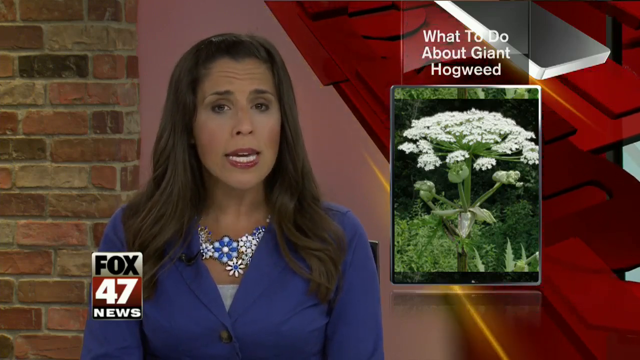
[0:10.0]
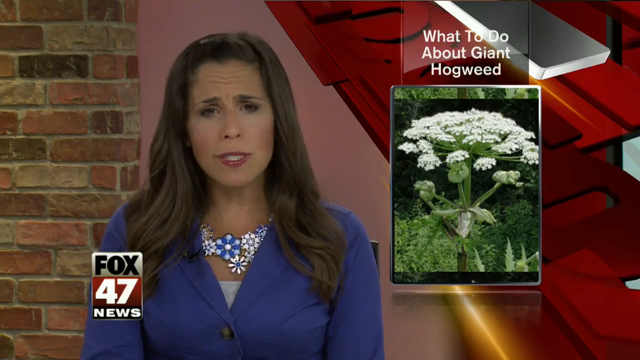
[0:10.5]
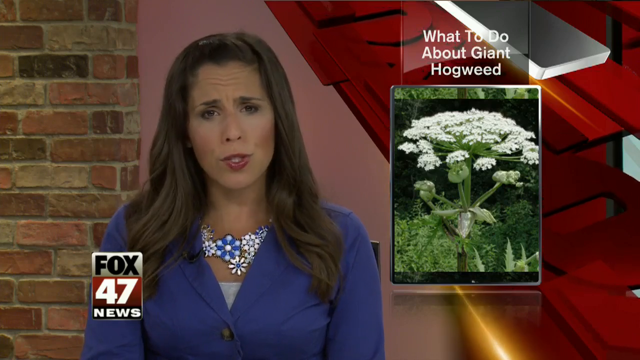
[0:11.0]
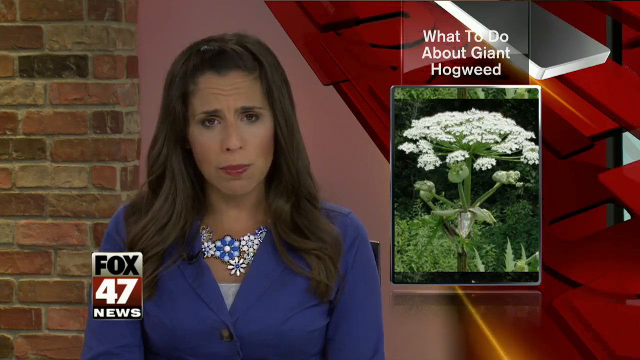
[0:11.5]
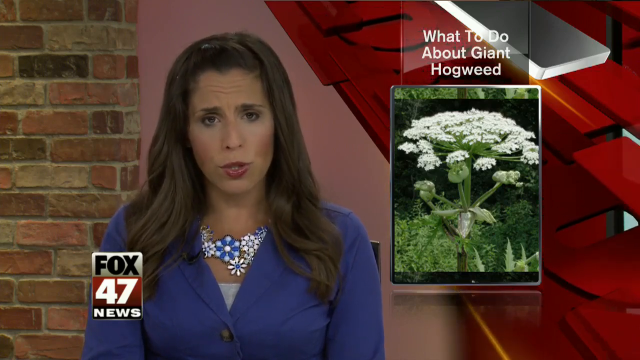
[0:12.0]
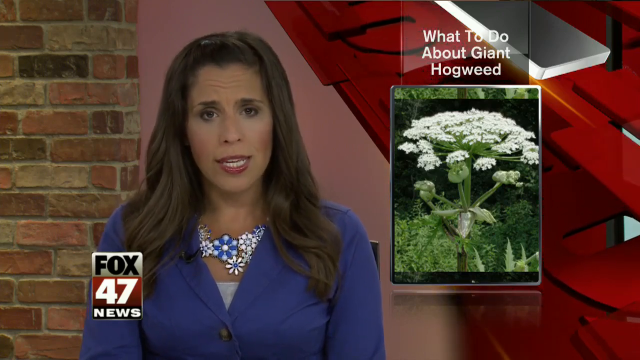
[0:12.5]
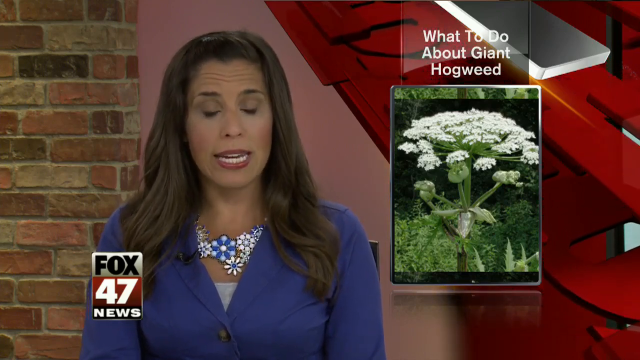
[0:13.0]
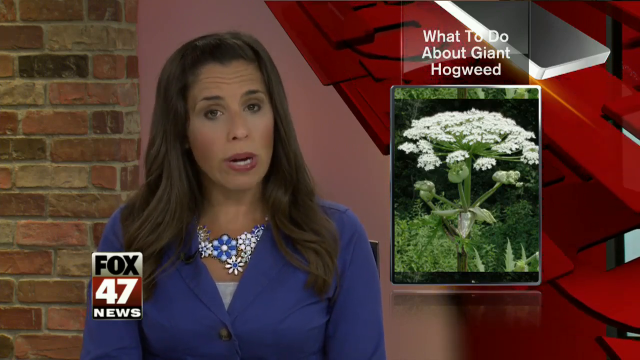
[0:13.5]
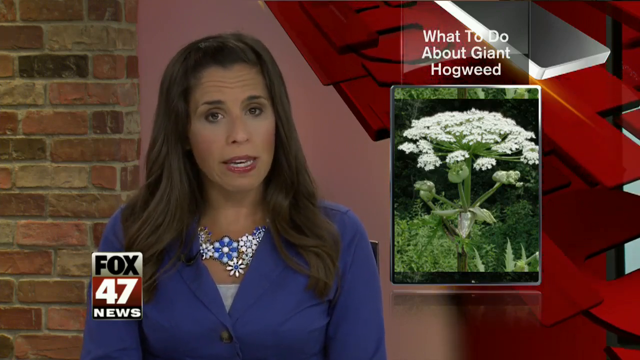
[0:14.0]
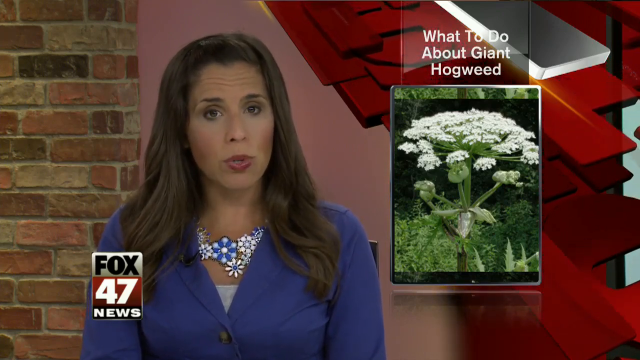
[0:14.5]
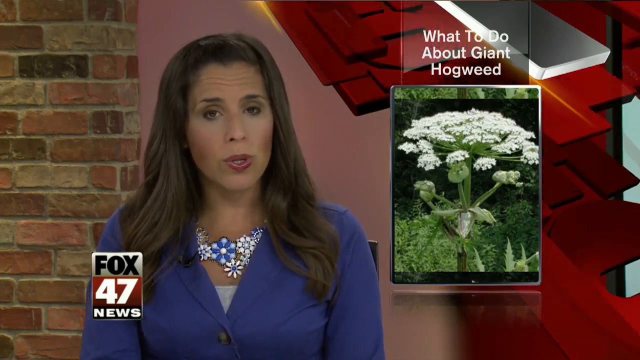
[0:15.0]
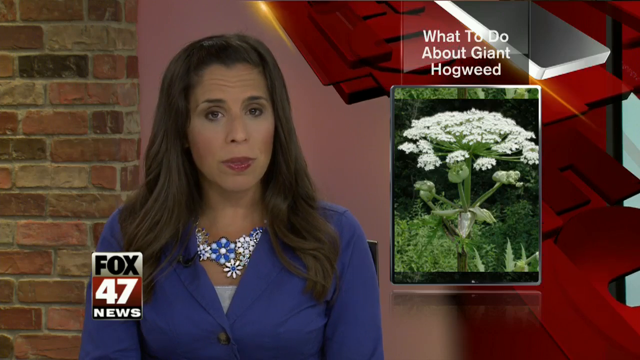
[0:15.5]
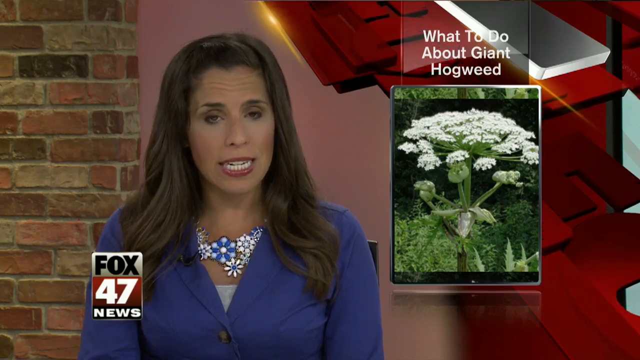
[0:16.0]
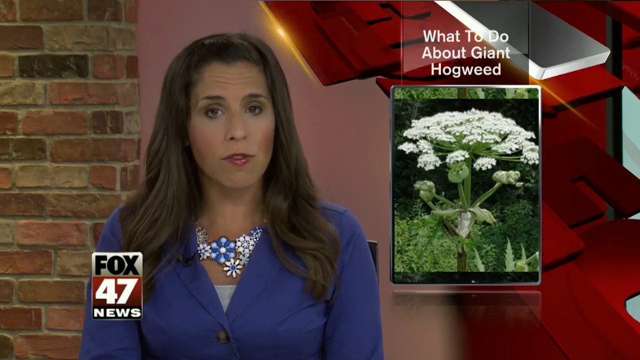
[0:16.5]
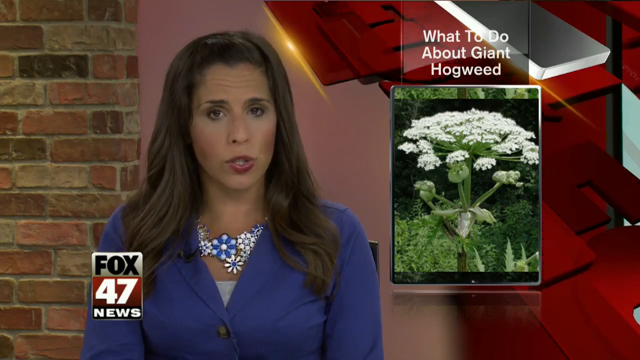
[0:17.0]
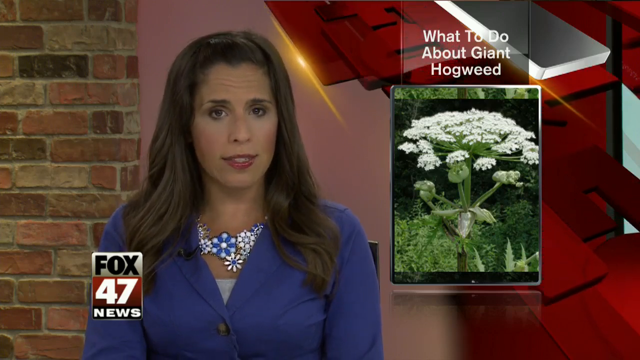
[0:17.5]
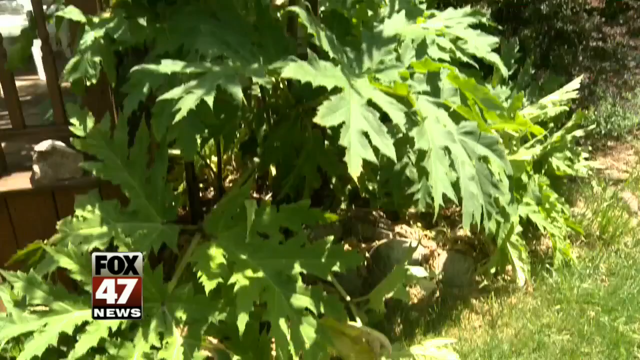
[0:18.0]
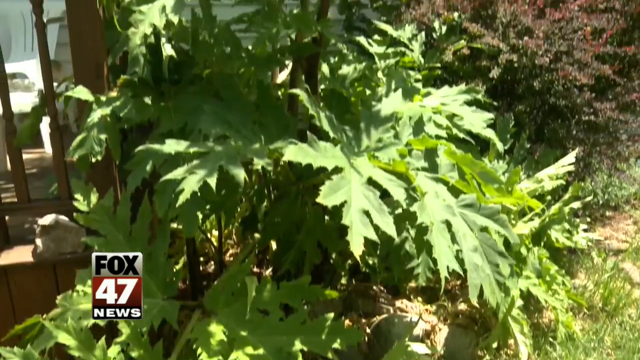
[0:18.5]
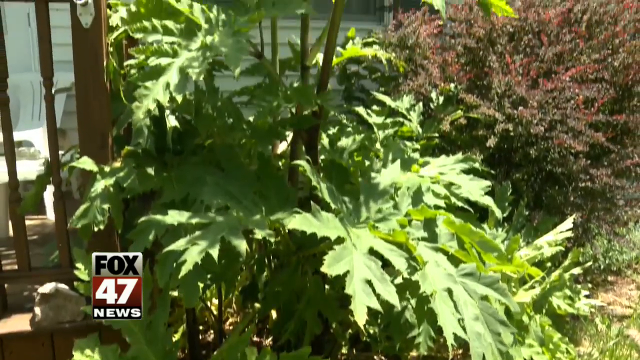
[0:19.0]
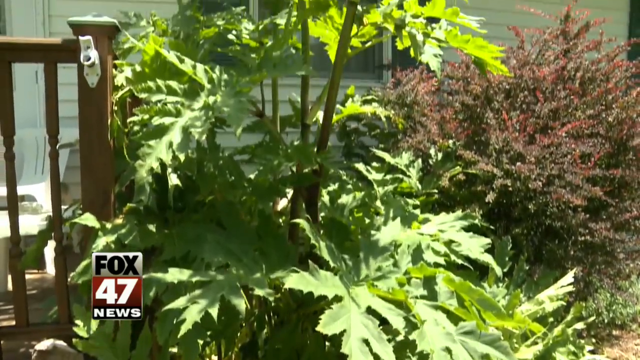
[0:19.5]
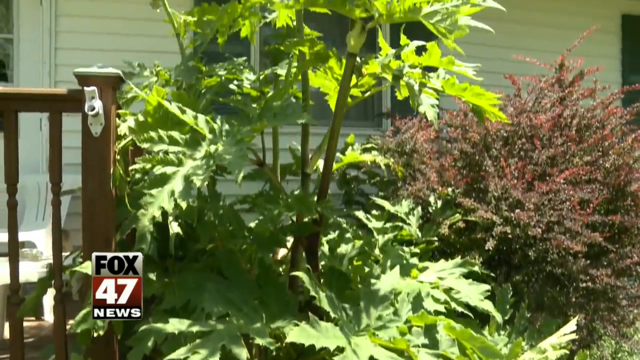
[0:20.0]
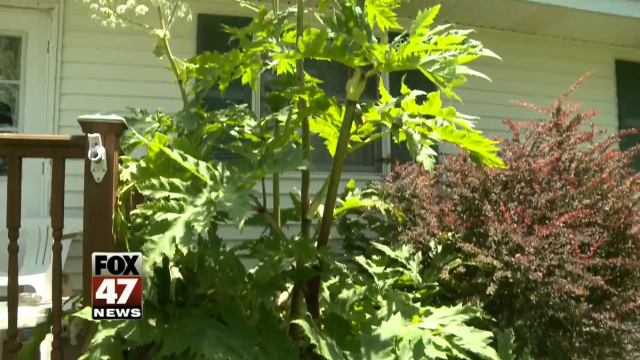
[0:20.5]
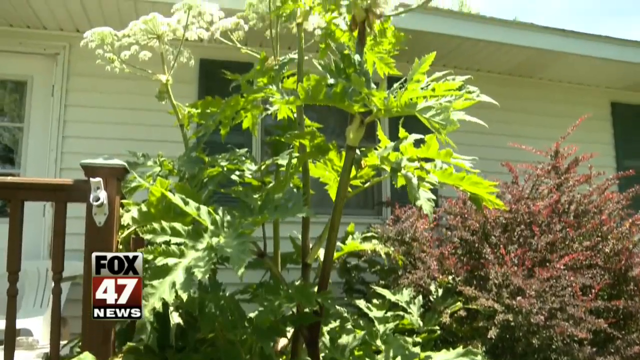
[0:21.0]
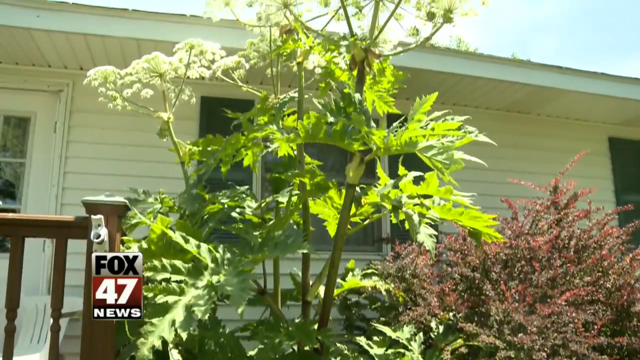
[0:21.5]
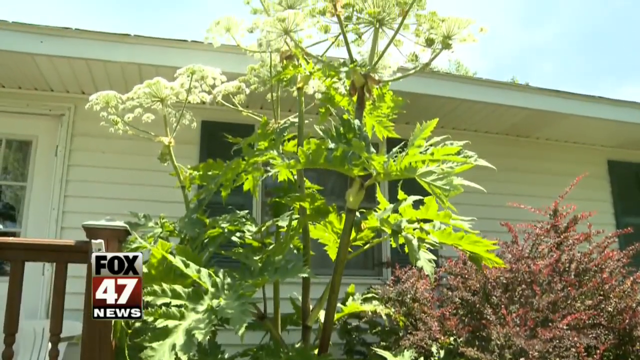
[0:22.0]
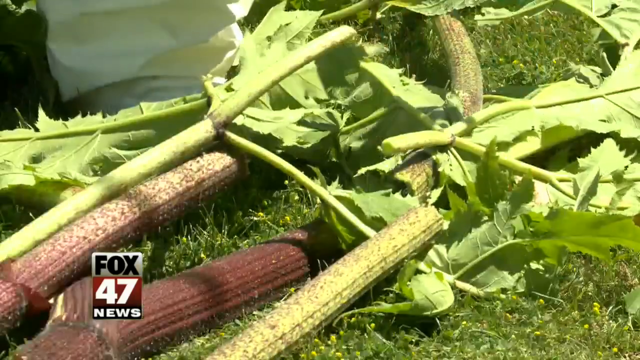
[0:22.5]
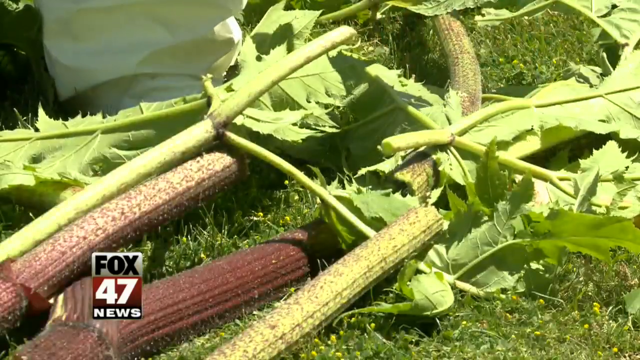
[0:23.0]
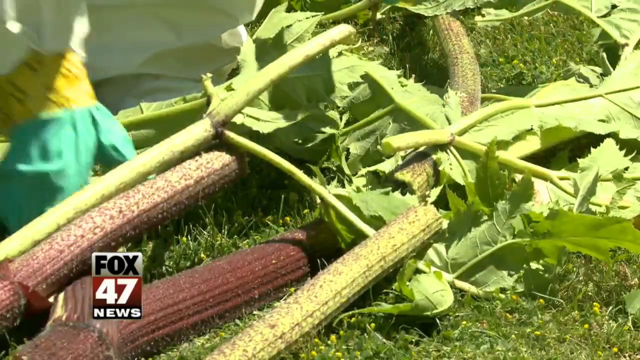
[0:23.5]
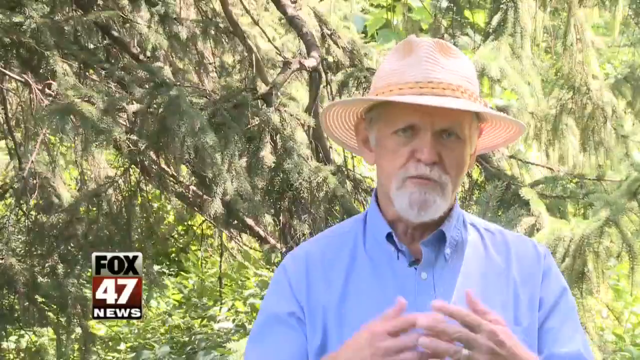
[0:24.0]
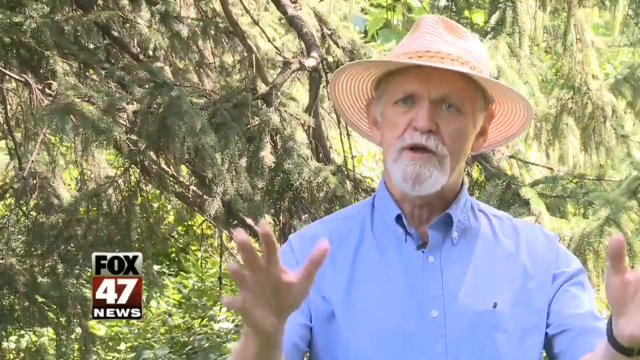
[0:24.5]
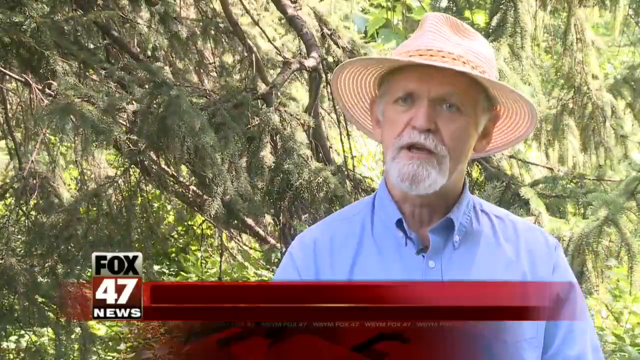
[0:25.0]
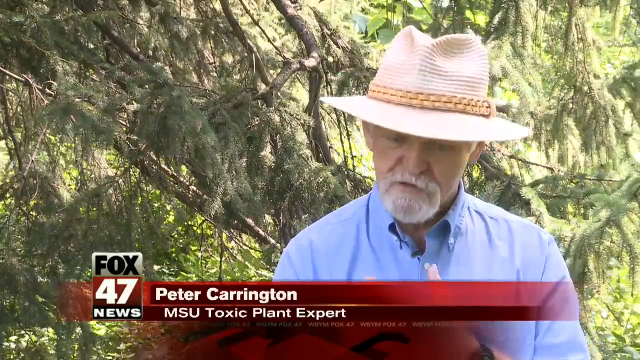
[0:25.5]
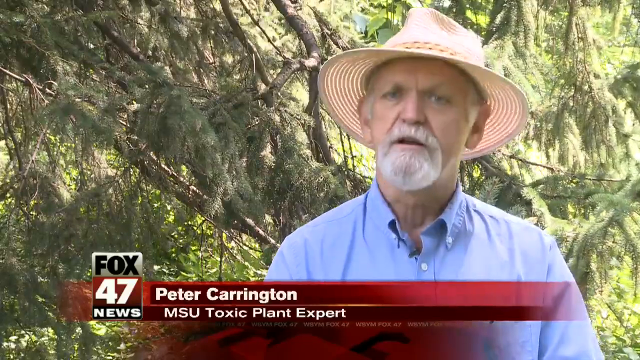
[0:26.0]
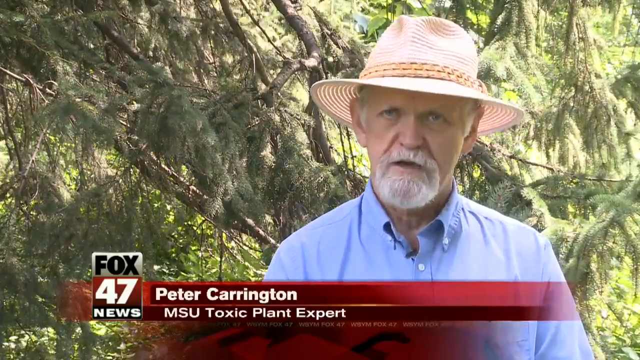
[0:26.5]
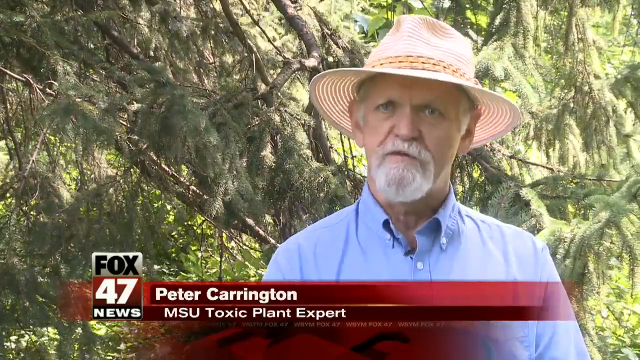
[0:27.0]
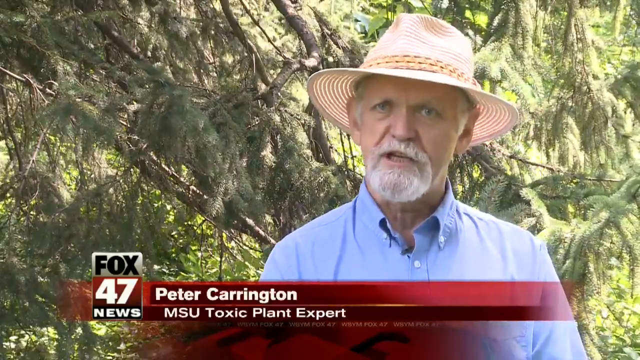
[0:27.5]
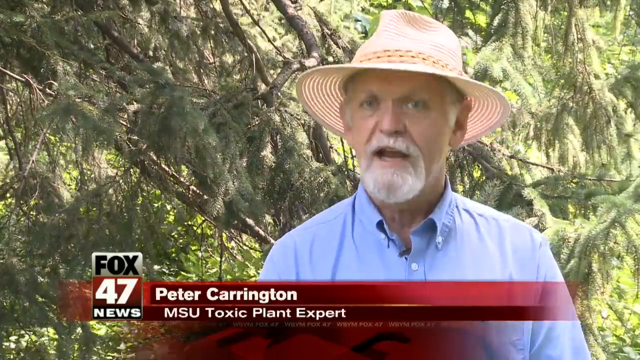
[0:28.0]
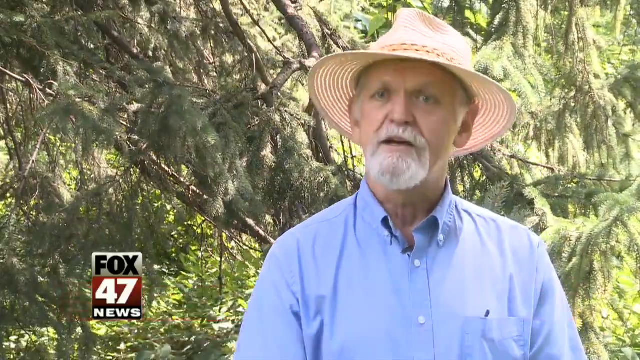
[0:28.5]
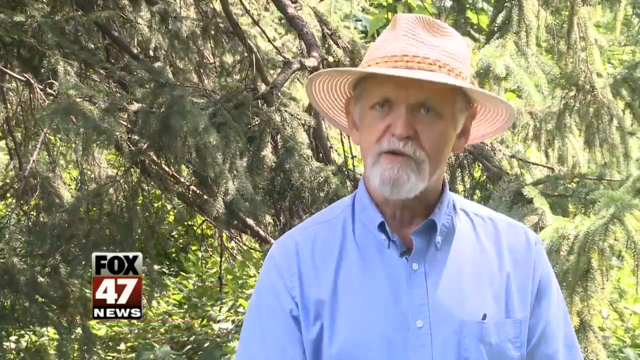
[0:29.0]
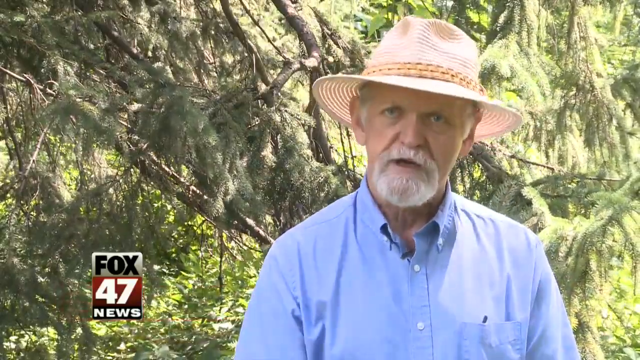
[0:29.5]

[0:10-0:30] The woman speaks about giant hogweeds. She wears a blue coat and a necklace of blue and white flowers. Behind her is a face brick wall, and next to it is a solid wall painted a pinkish color. A picture of a hogweed appears; it is green with white flowers. On the left-hand side of the presenter is a red, gray and white graphic with a gold light shining through. Next, a video shows a giant hogweed in front of a house being cut down by people in PPE uniforms. A white man with a hat and a goatee, wearing a blue shirt, is then shown speaking; he is identified as Peter Carrington, MSU toxic plant expert. He shakes his head as he speaks.